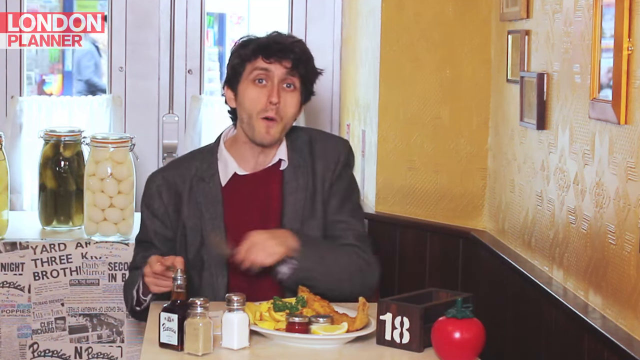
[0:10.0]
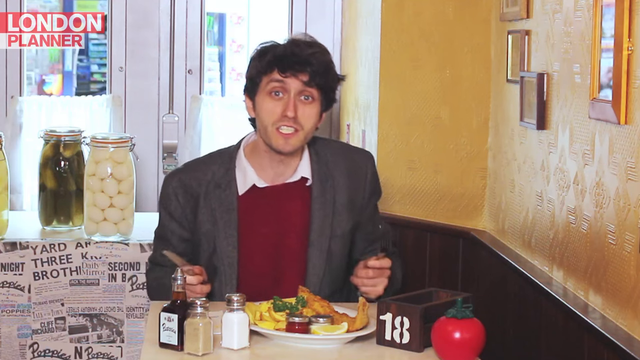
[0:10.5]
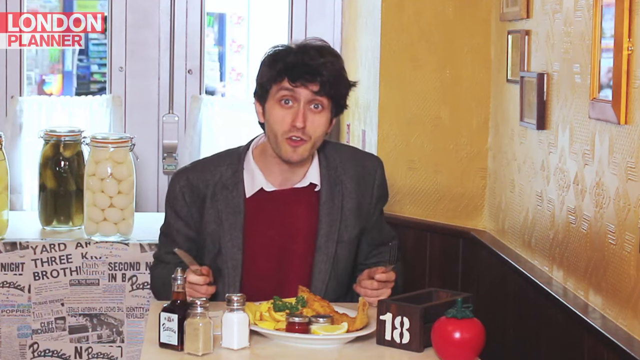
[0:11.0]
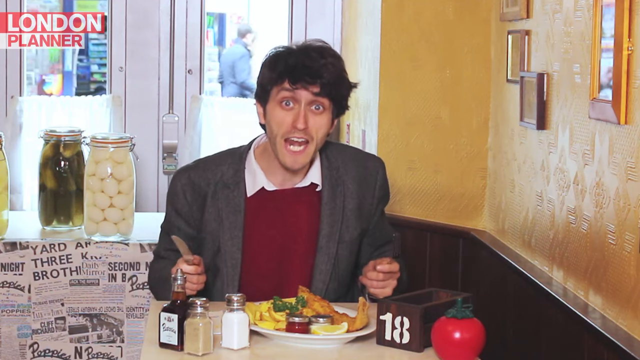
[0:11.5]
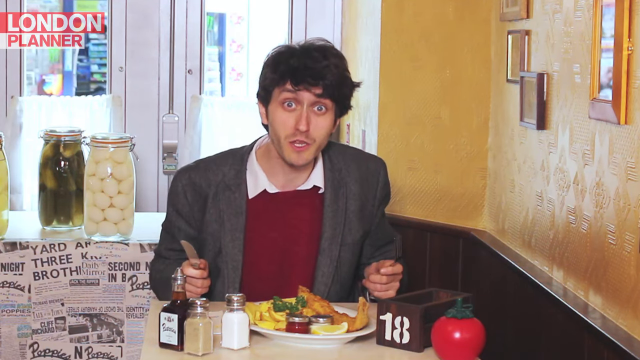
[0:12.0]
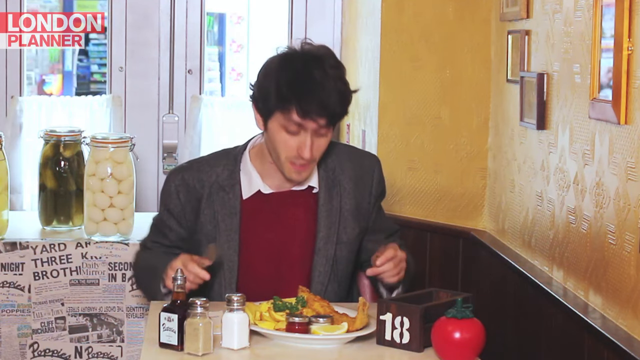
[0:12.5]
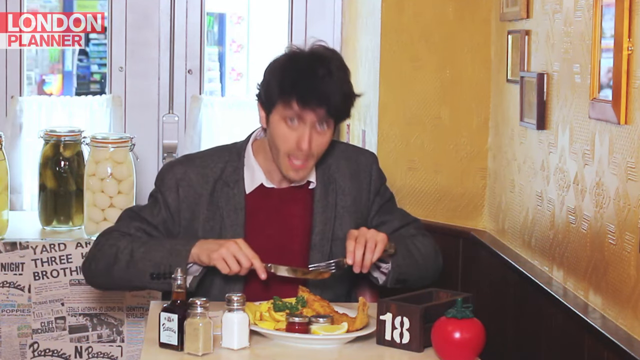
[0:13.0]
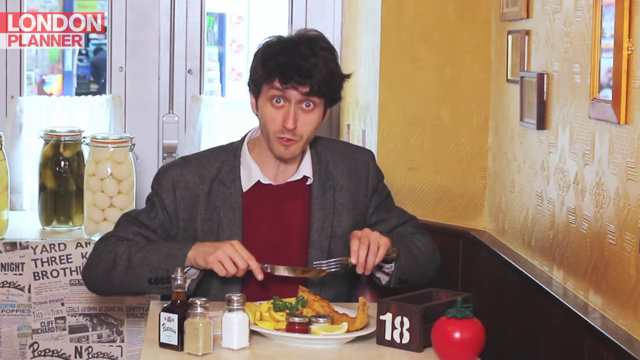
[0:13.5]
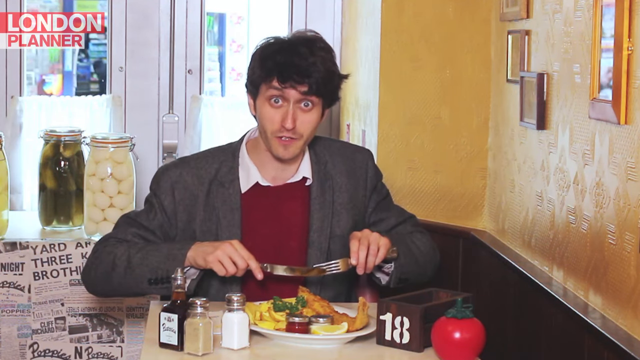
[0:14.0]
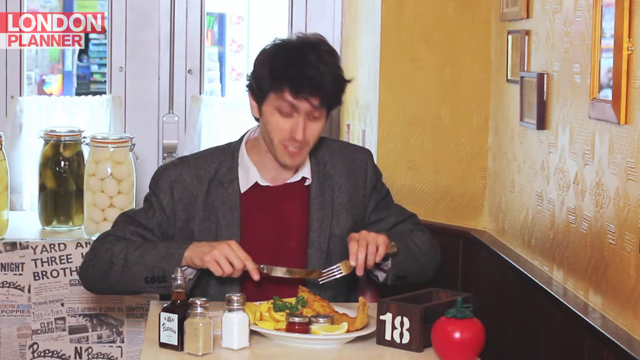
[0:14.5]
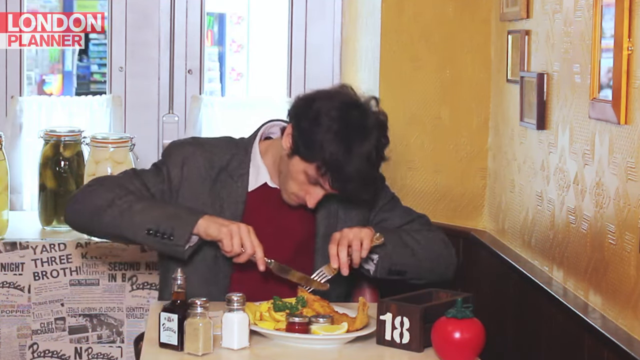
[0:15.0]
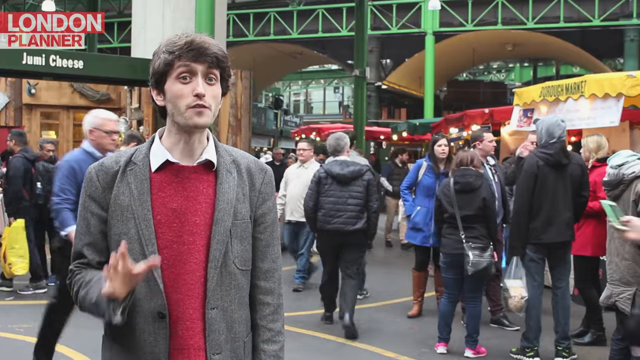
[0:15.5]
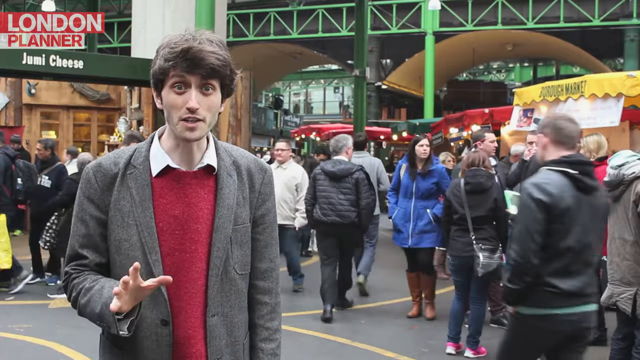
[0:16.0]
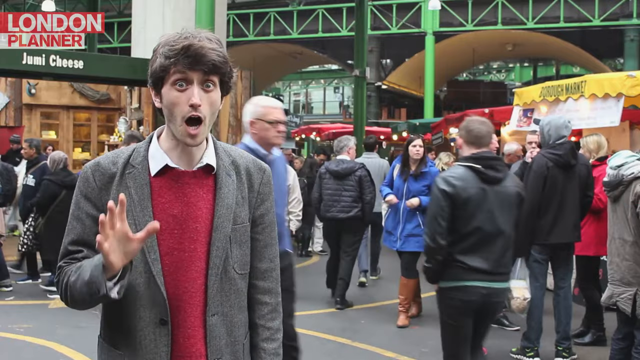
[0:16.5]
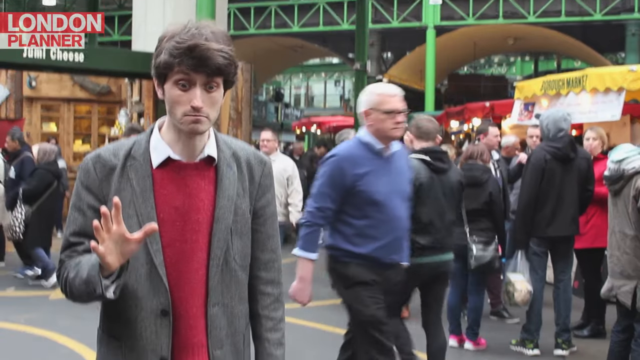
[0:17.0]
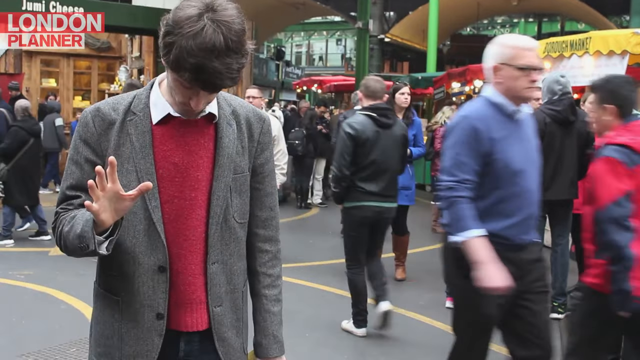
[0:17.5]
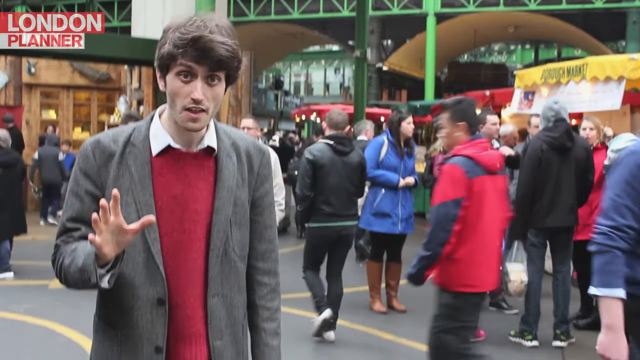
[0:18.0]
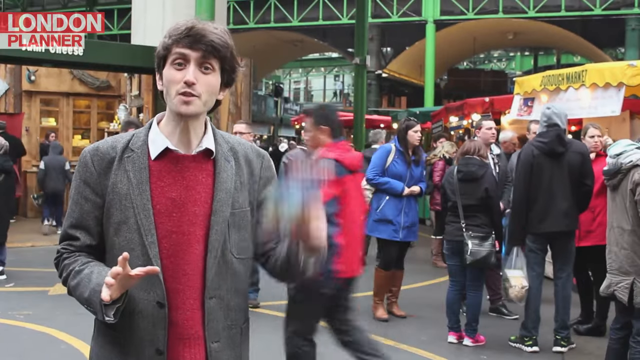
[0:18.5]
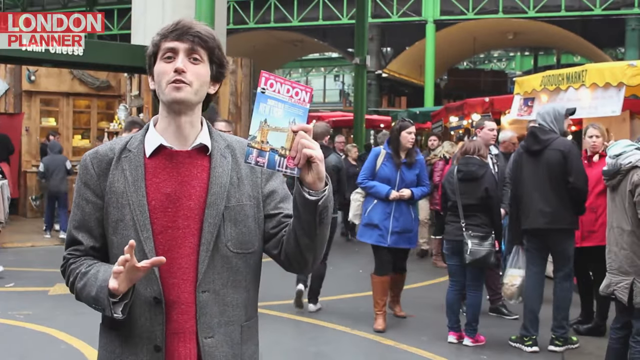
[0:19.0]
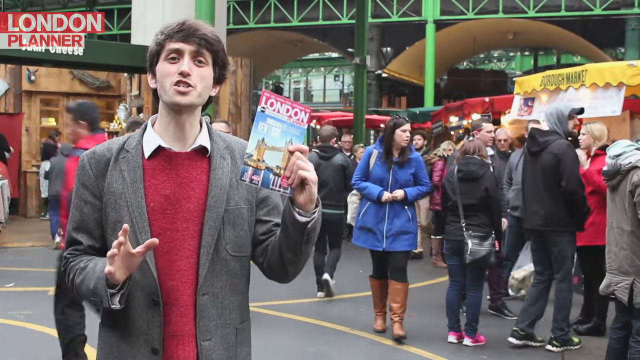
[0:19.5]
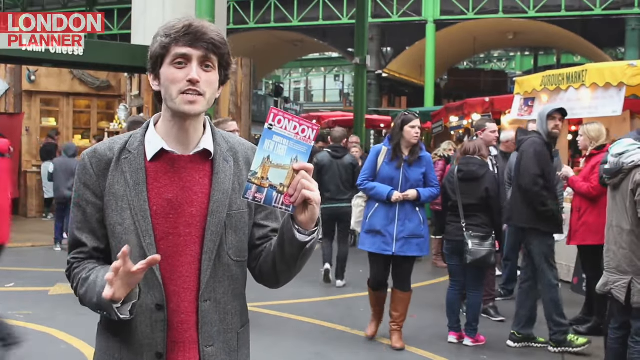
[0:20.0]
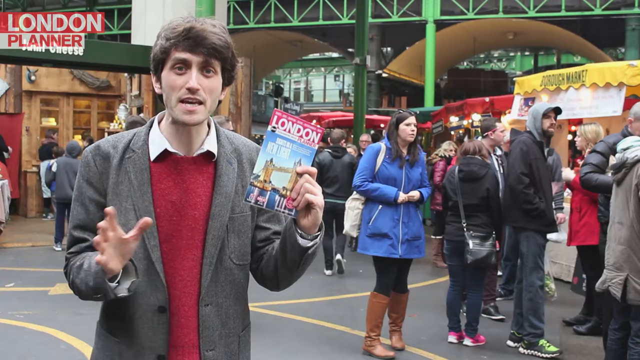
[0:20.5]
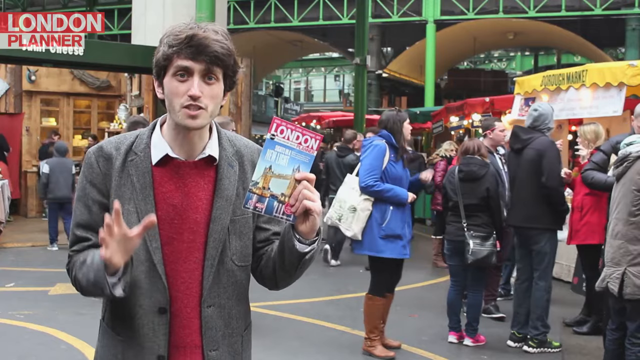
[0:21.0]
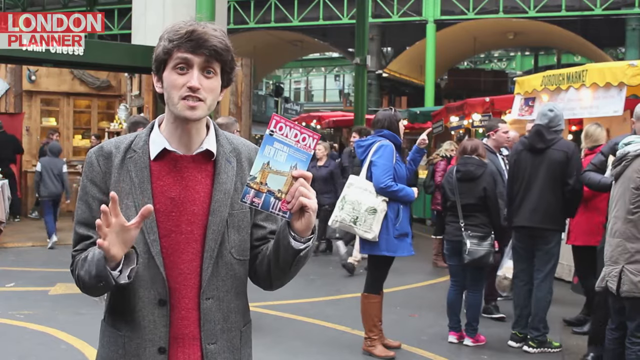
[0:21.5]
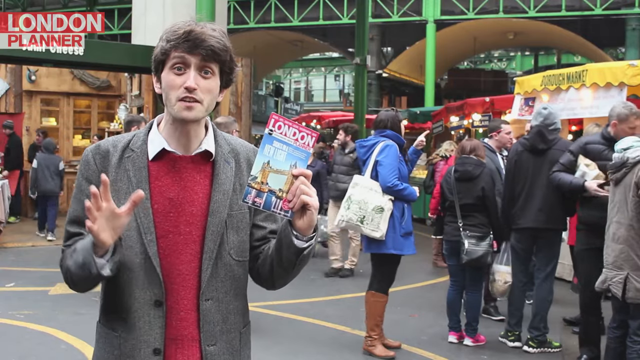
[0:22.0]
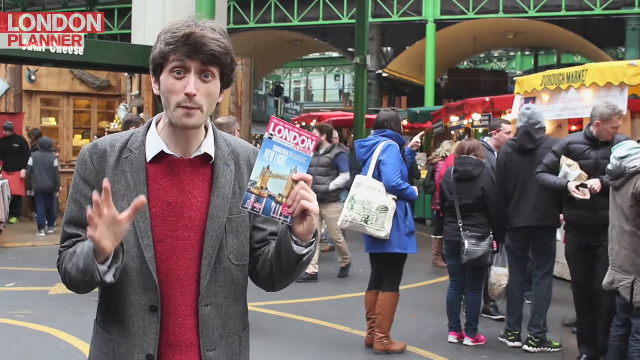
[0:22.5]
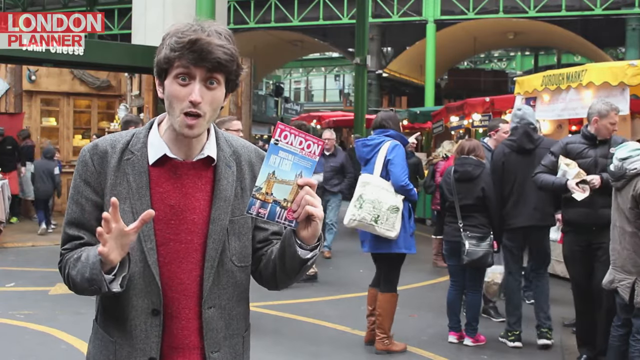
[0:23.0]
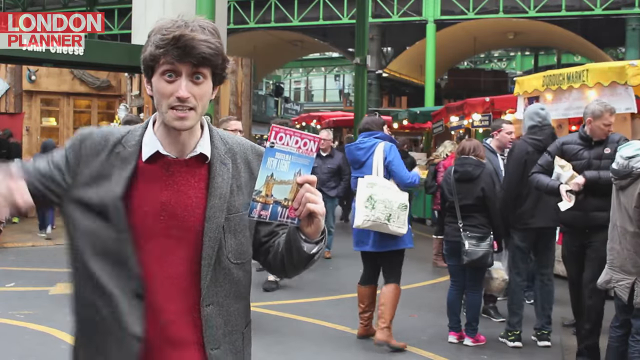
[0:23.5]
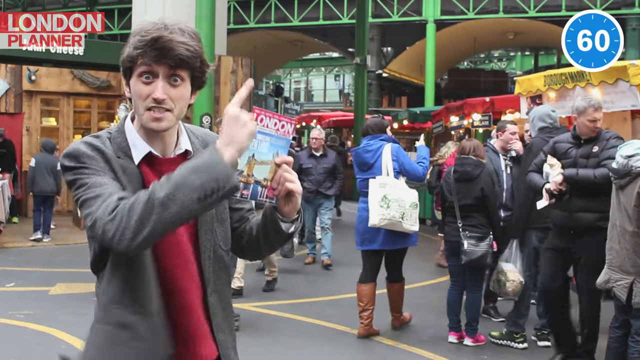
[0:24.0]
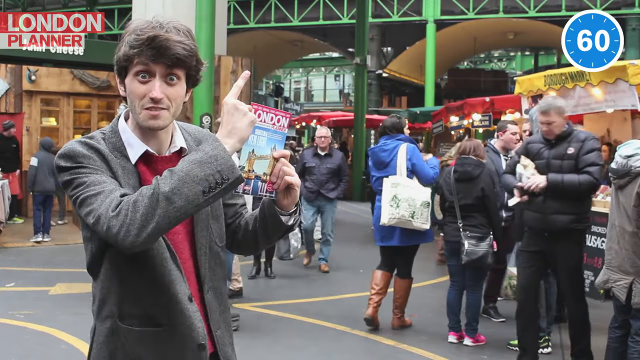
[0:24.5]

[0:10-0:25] The man sits in his seat talking to the camera and eating. He digs into a large platter of fish and chips with a fork and a knife, looks up at the camera with his eyes opened a little wider than normal, and prepares to cut the fish. The scene then switches to him outside; the red item turns out to be a red sweater worn with his white collared shirt and gray sports jacket. The outdoor location looks to be some sort of farmer's market with different vendors. He talks in front of the camera using hand gestures, swings his right arm up and points up to the left, and holds something that looks like it says London planner, apparently something given to visitors.